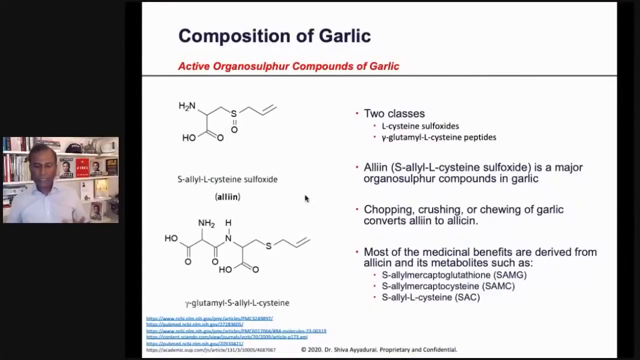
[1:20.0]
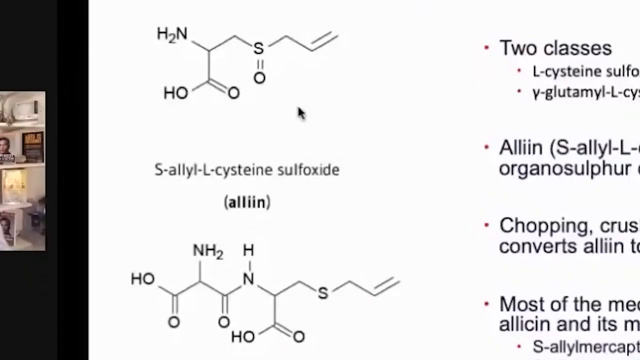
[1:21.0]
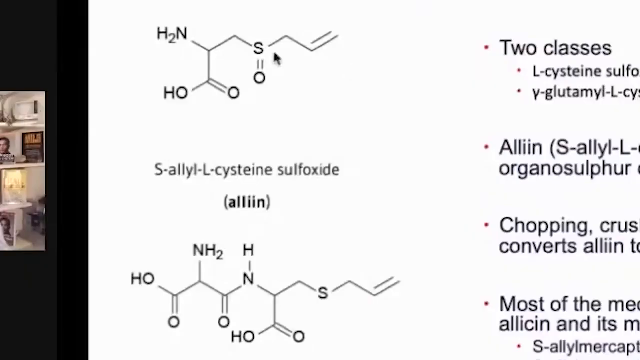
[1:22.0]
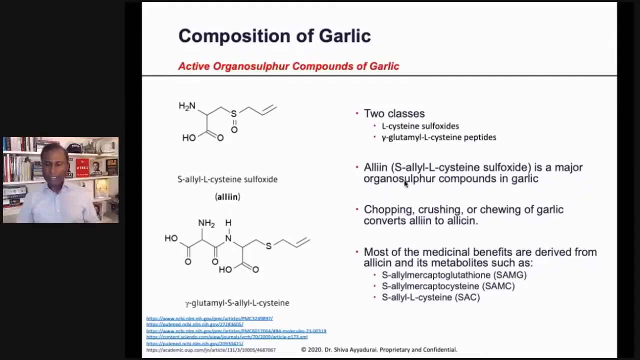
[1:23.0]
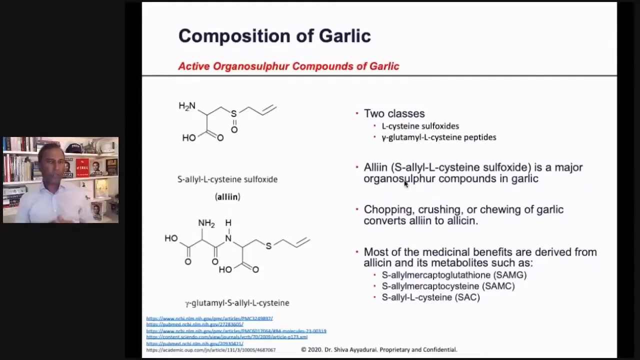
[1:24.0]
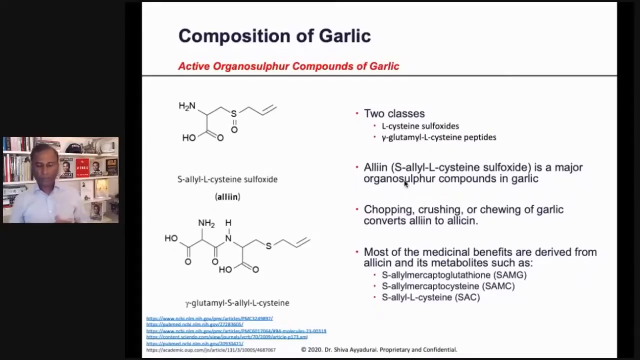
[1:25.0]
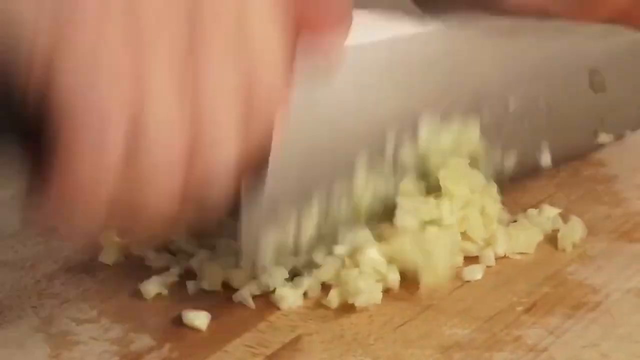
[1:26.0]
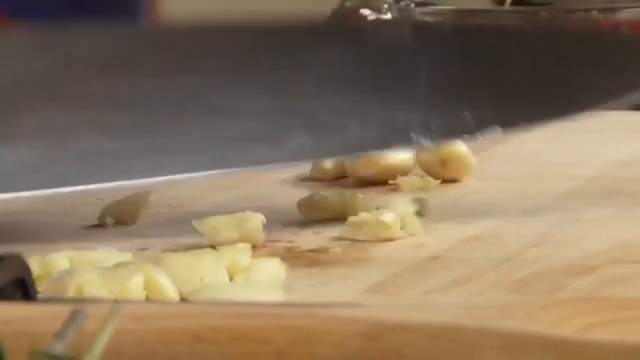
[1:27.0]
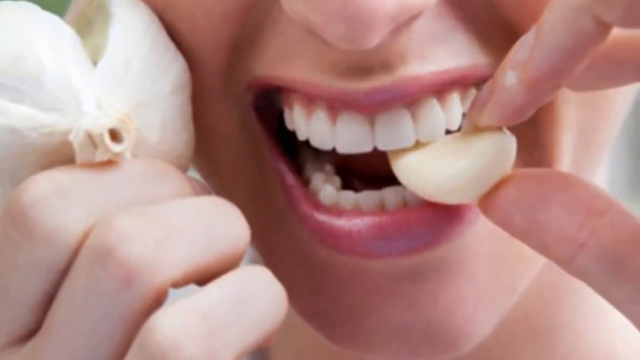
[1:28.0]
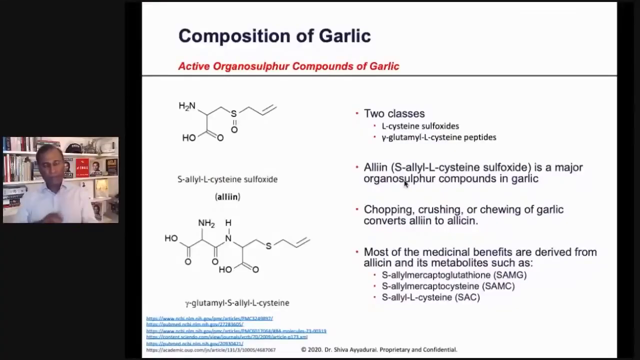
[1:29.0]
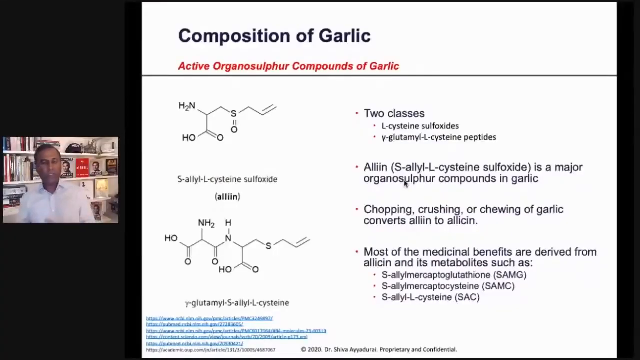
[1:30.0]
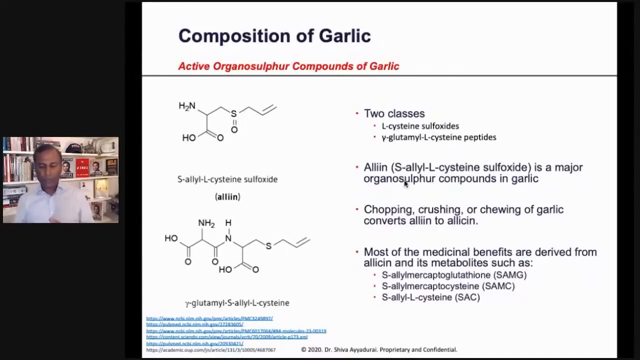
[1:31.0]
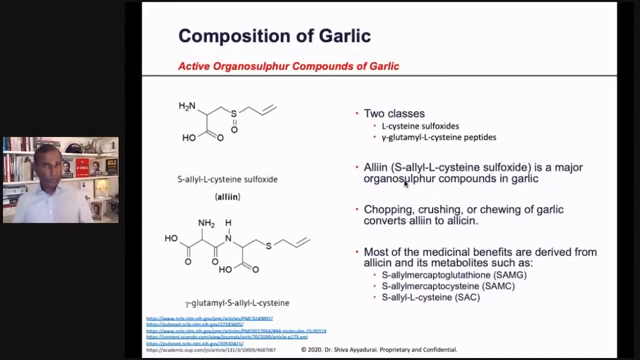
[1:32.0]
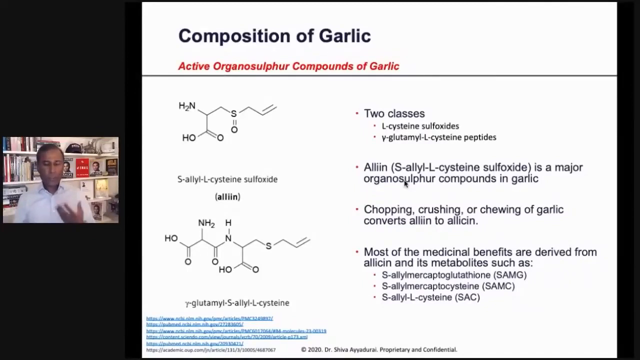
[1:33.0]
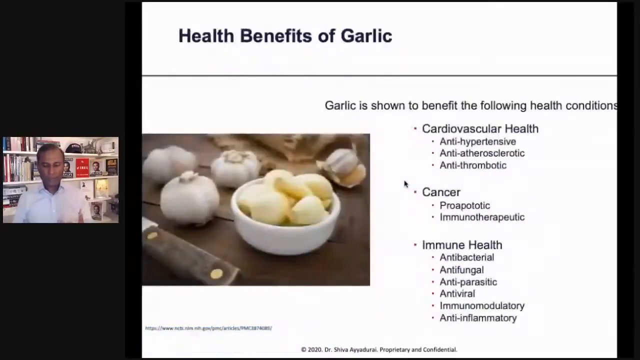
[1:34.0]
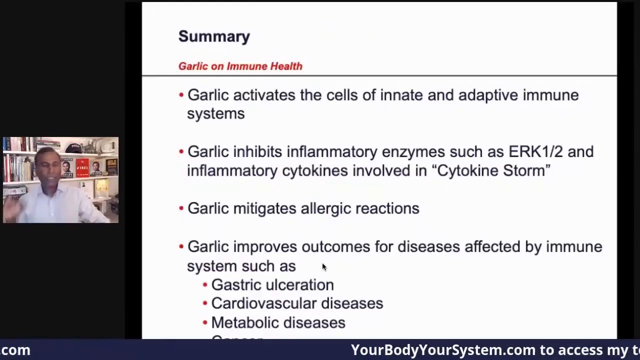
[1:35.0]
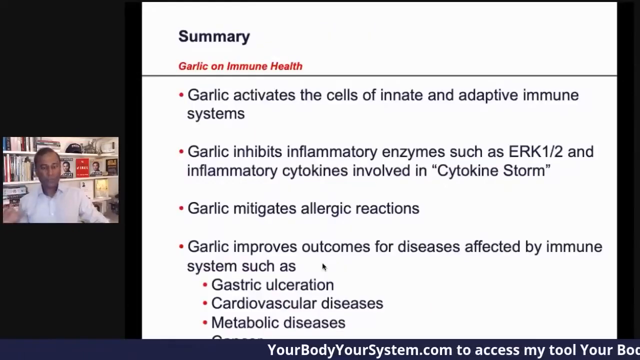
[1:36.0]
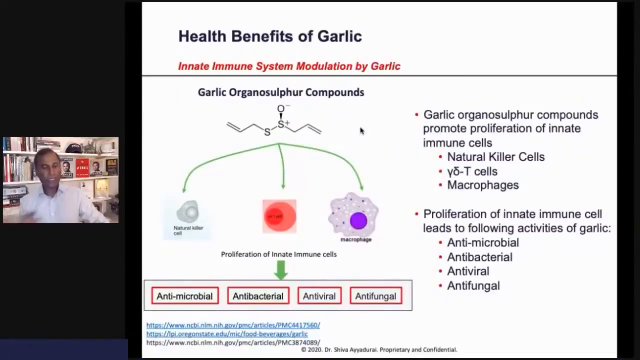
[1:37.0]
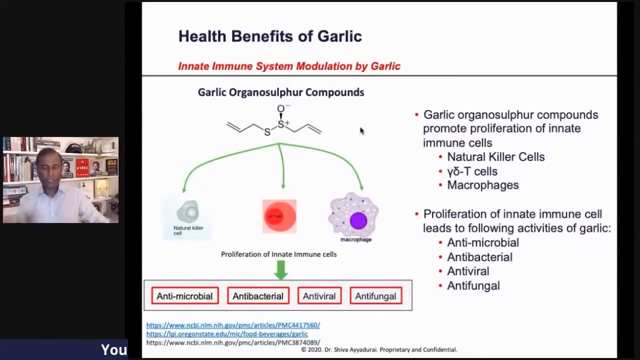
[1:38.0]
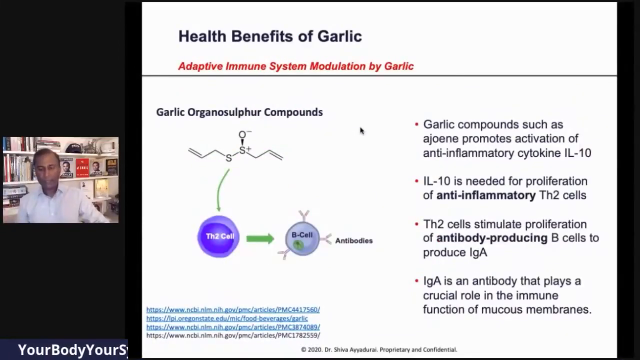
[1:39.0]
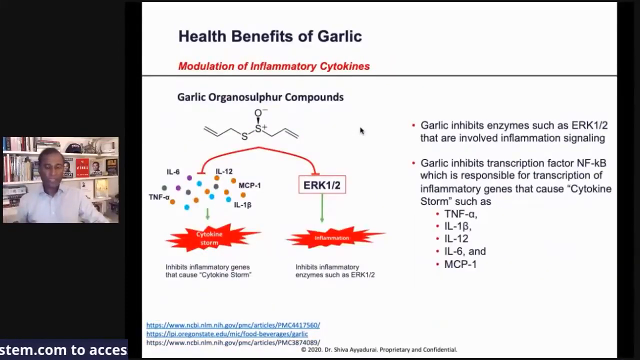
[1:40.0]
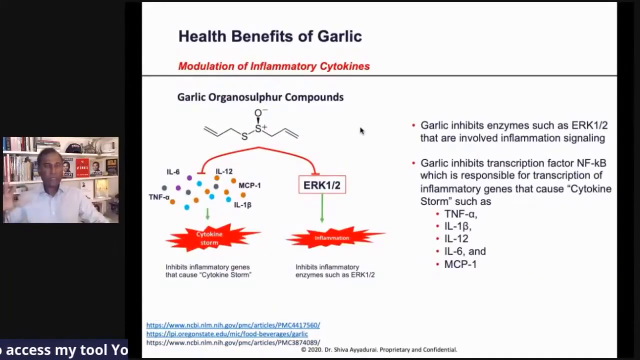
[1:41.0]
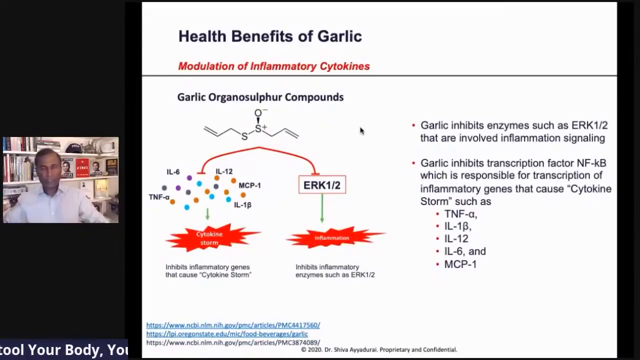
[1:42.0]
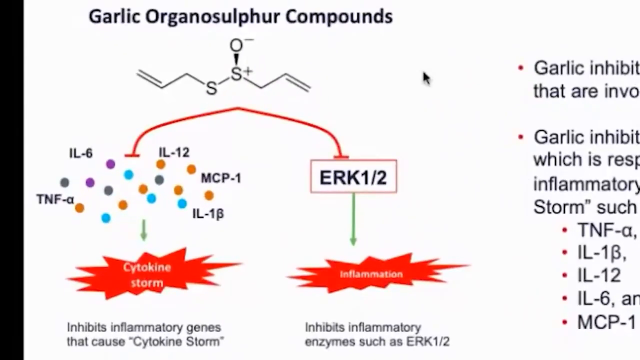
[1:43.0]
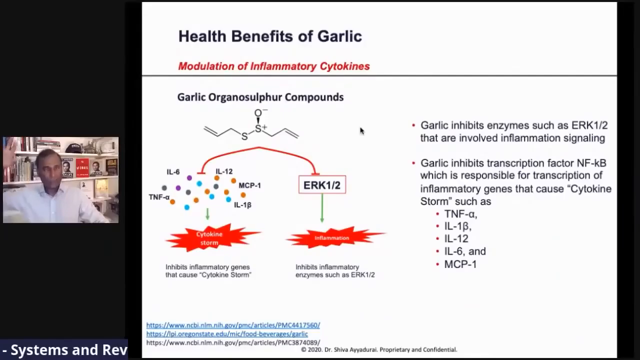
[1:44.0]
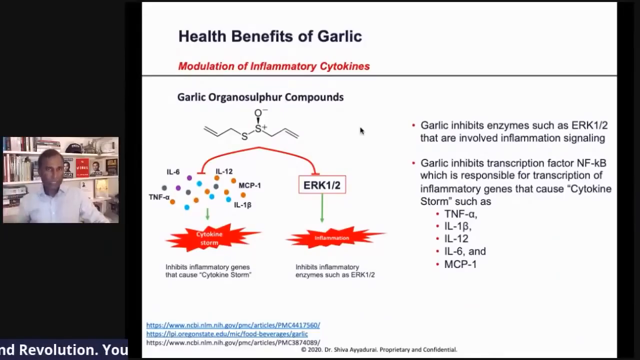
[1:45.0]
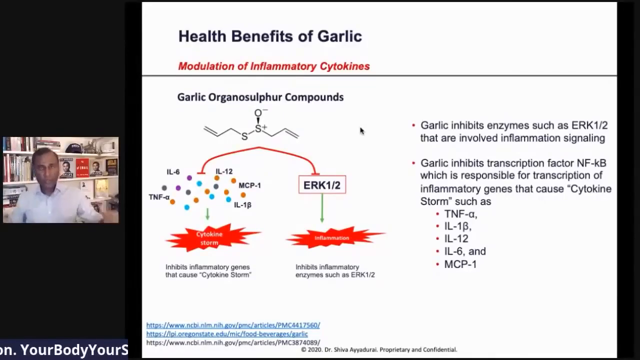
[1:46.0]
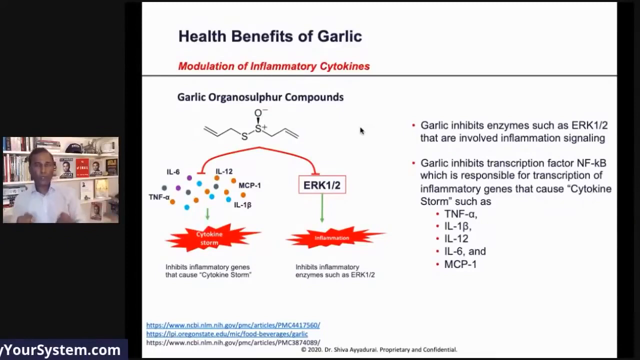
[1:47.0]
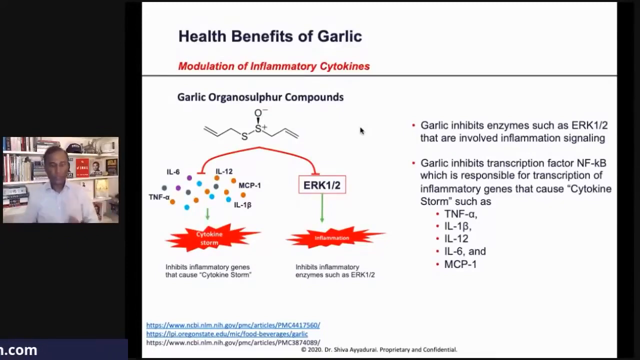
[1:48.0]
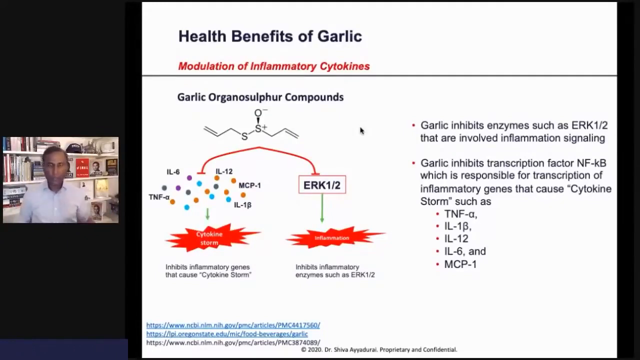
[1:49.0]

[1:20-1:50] The video zooms in on the chemical composition of the elements, and the mouse moves in circles around them. Next, someone uses a big kitchen knife to mince garlic on a wooden board, the hands holding the knife very firmly. A very similar shot follows in which the garlic slices are still intact and the knife is used to move them around on the surface. A close-up picture then shows an open mouth in the middle of biting a garlic slice held by the person's left hand, while the right hand holds some pieces of garlic beside the mouth. The video returns to the PowerPoint, where the man is still talking. A new page titled "Health Benefits of Garlic" appears for a brief second, but the video quickly changes to a page titled "Summary", with smaller red text underneath reading "Garlic on Immune Health". A black line divides the section, followed by four points of text with no images: "Garlic activates the cell of innate and adaptive immune systems"; "Garlic inhibits inflammatory enzymes such as ERK1/2, and inflammatory cytokines involved in cytokine storm"; "Garlic mitigates allergic reactions"; and "Garlic improves outcome for diseases affected by immune system, such as gastric ulceration, cardiovascular diseases, and metabolic diseases". The man then goes through two more pages too quickly to read anything, stopping on a page titled "Health Benefits of Garlic" with the subtitle "Modulation of Inflammatory Cytokines". The video zooms in on part of the page that highlights the garlic organosulfur compounds.